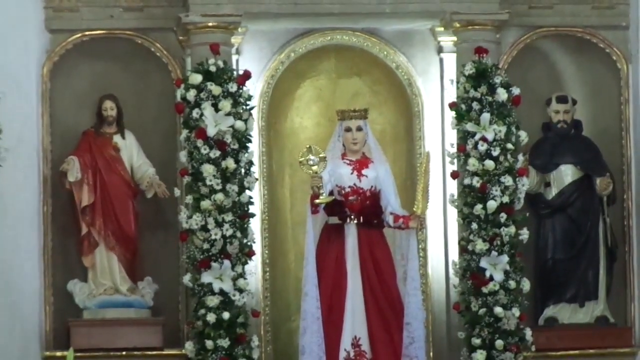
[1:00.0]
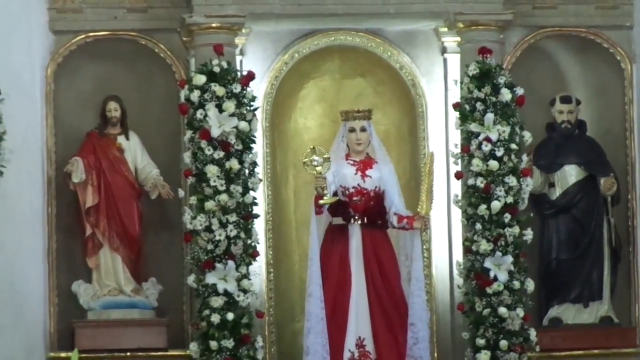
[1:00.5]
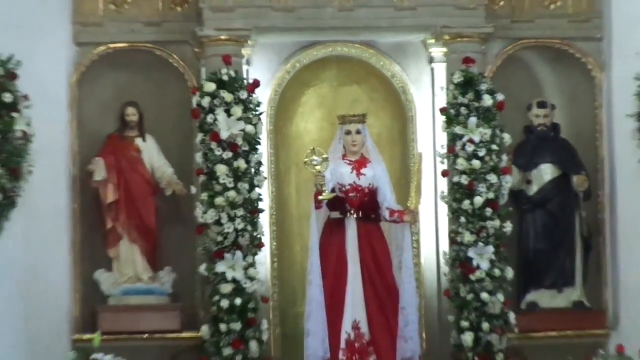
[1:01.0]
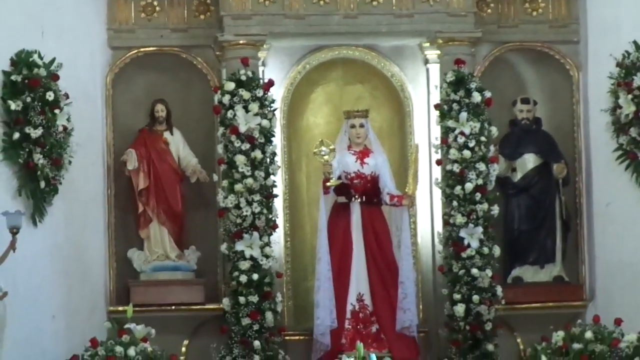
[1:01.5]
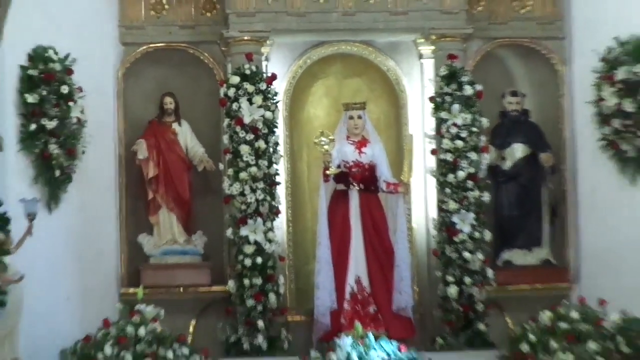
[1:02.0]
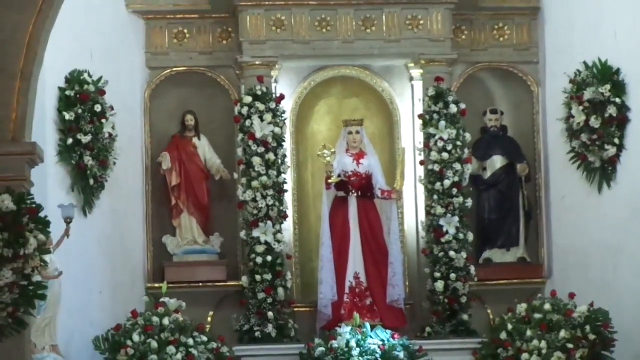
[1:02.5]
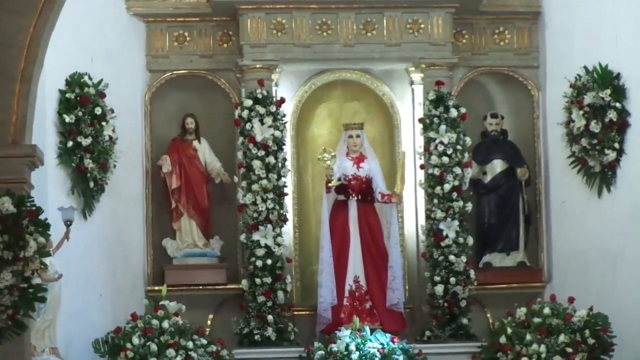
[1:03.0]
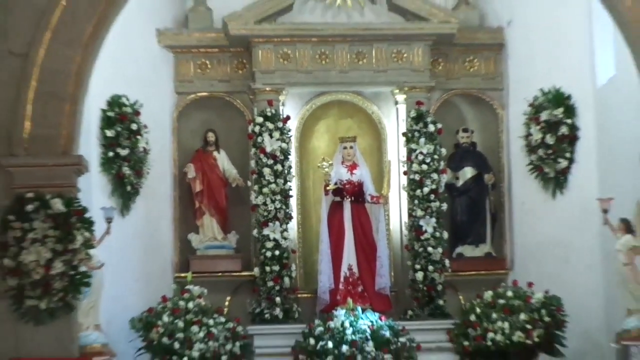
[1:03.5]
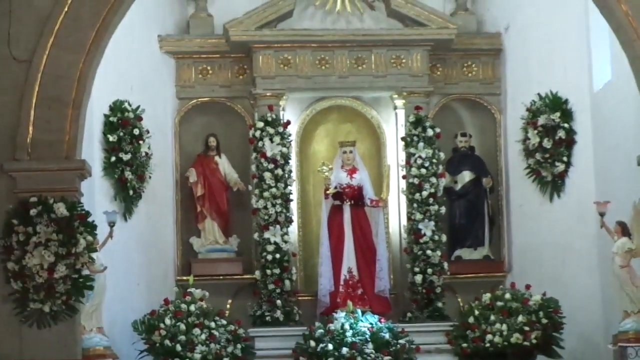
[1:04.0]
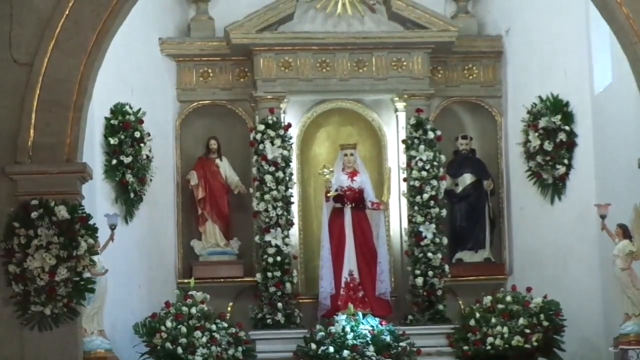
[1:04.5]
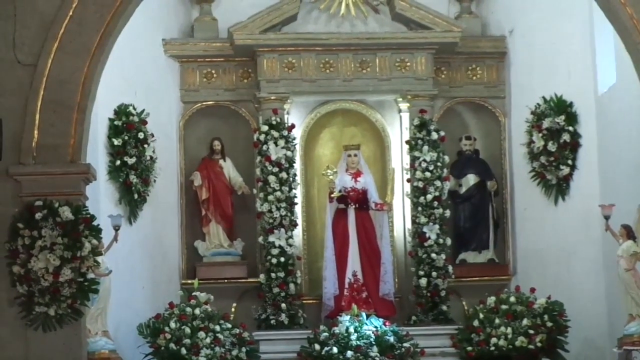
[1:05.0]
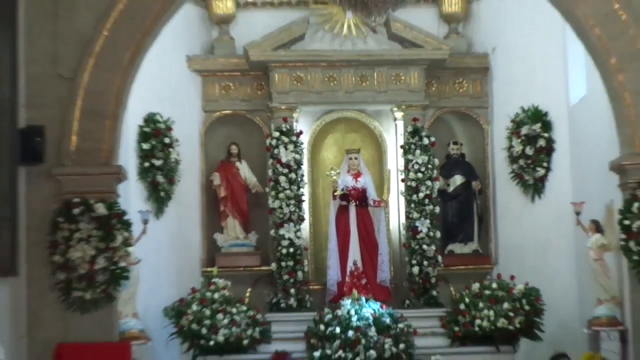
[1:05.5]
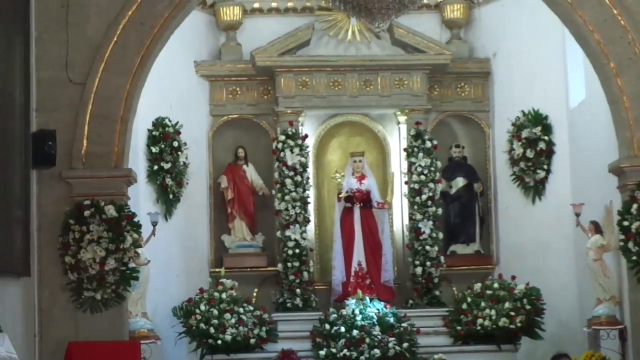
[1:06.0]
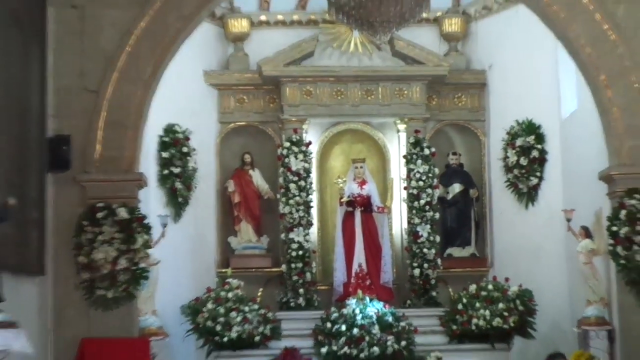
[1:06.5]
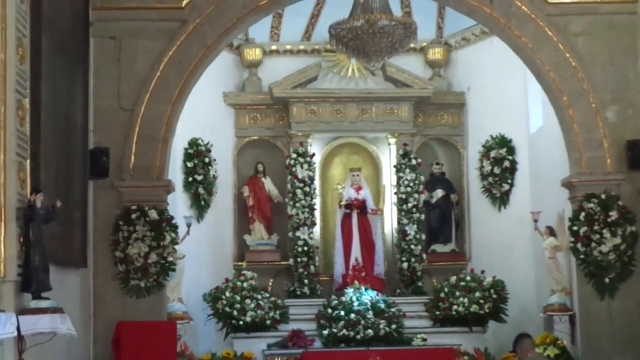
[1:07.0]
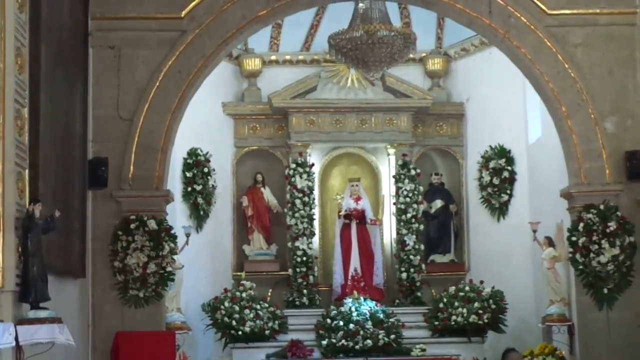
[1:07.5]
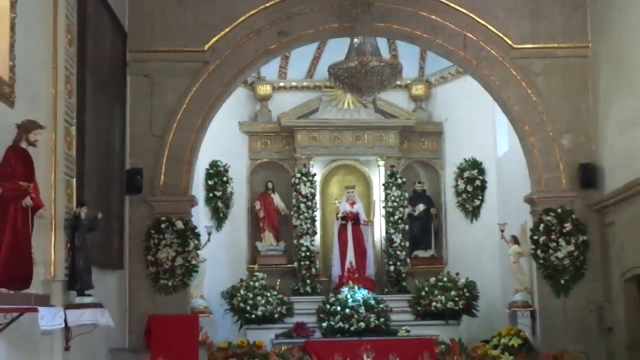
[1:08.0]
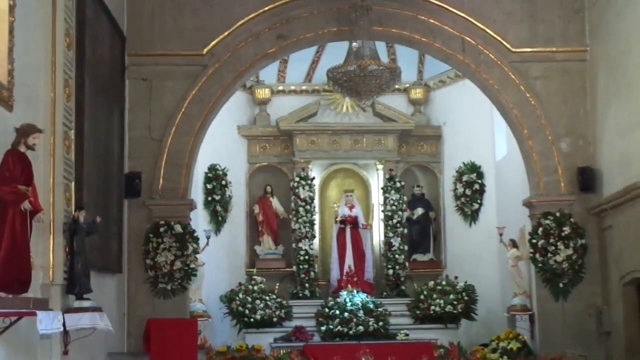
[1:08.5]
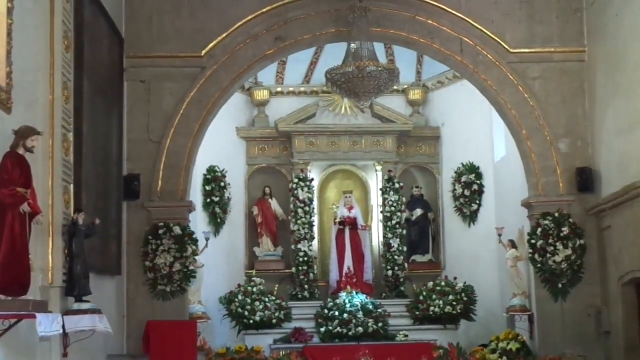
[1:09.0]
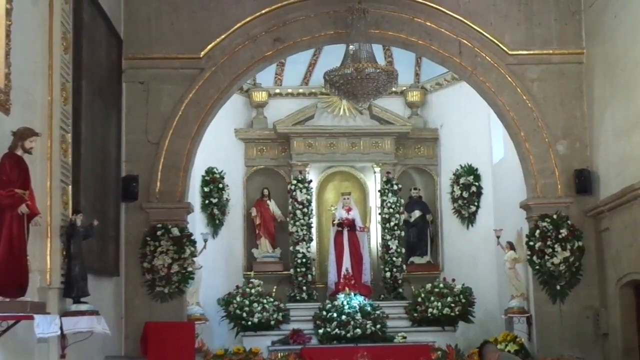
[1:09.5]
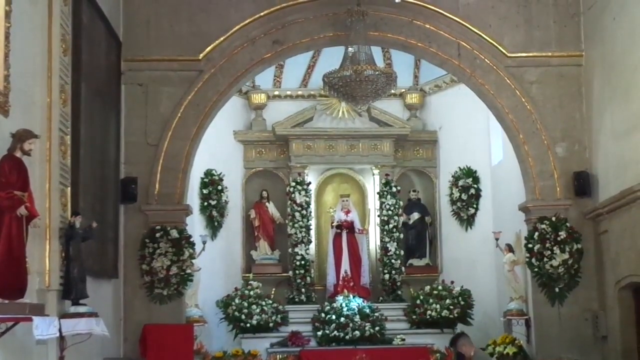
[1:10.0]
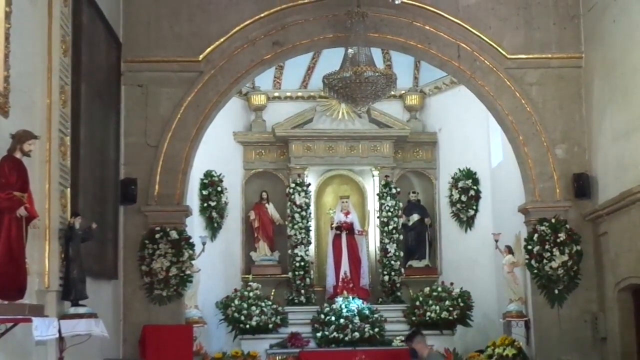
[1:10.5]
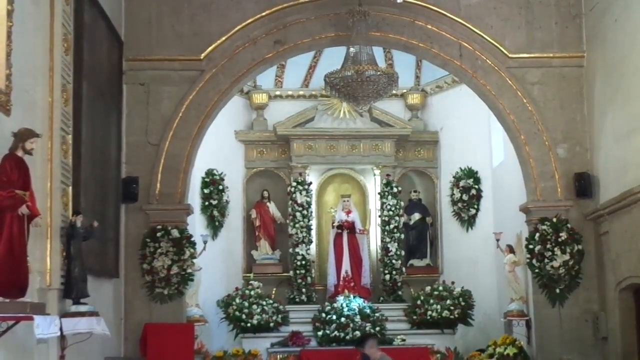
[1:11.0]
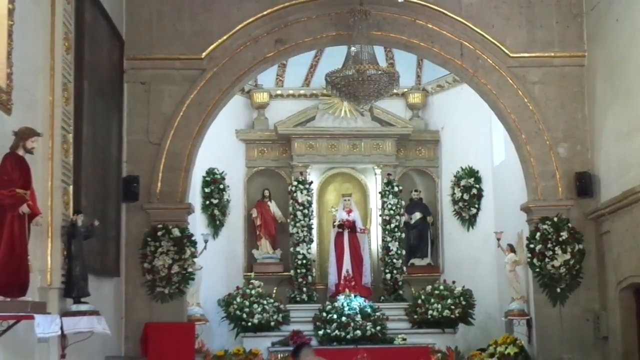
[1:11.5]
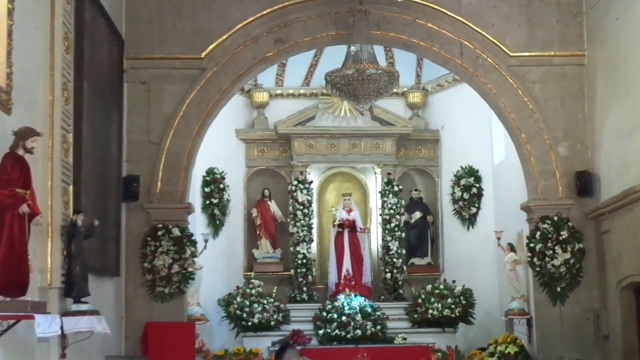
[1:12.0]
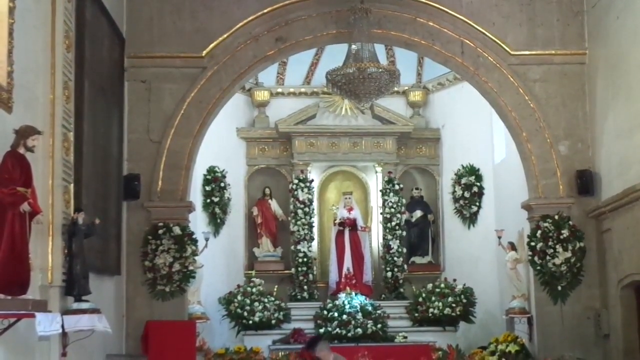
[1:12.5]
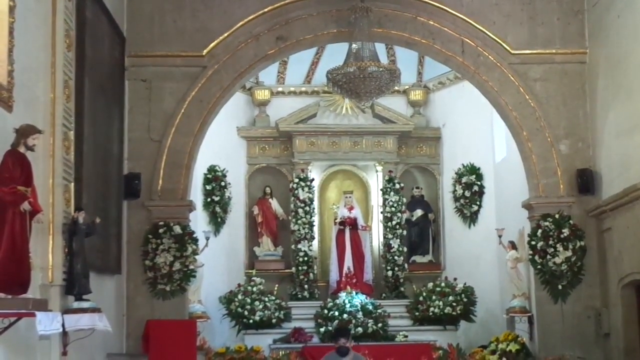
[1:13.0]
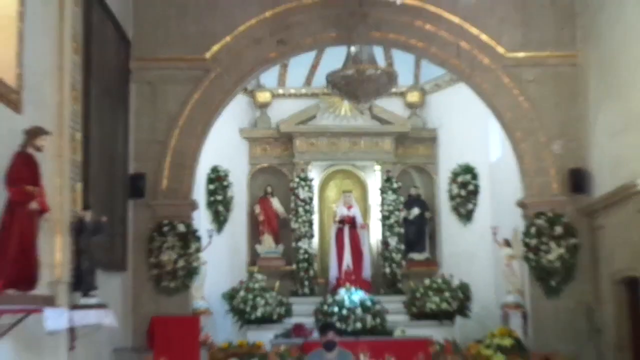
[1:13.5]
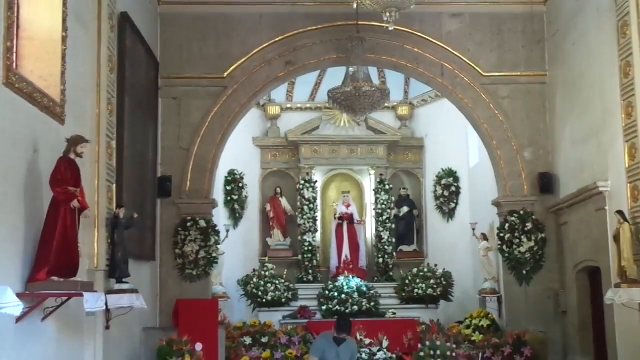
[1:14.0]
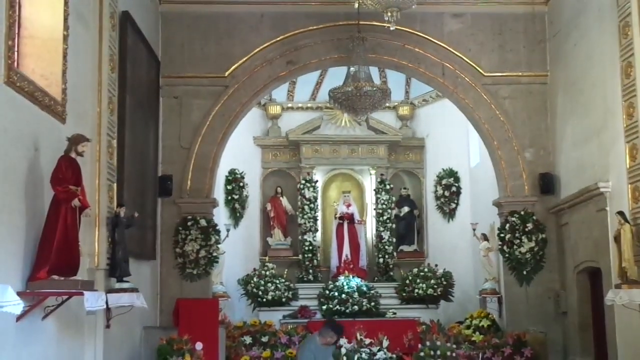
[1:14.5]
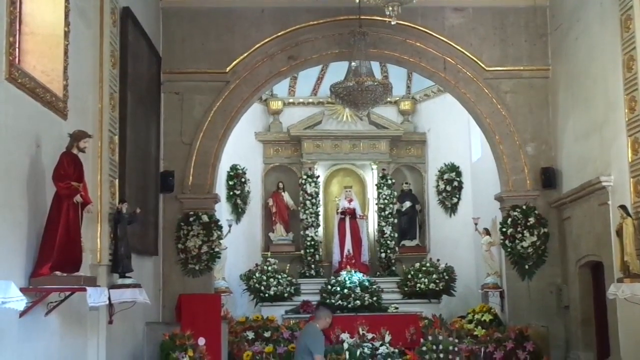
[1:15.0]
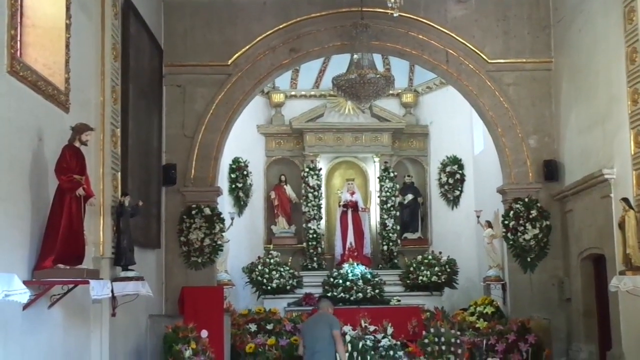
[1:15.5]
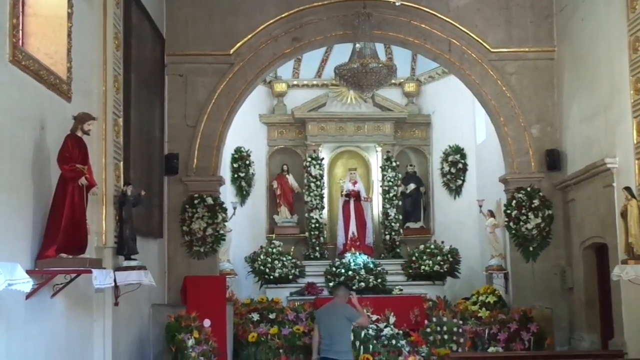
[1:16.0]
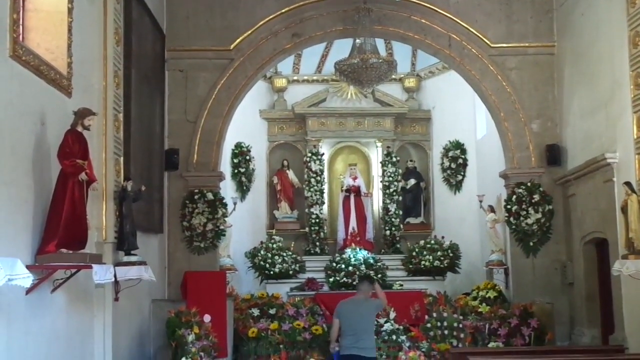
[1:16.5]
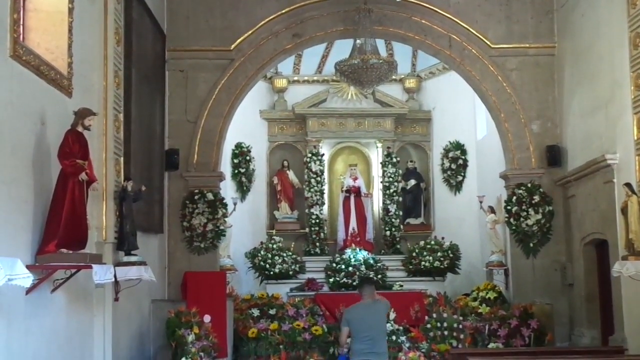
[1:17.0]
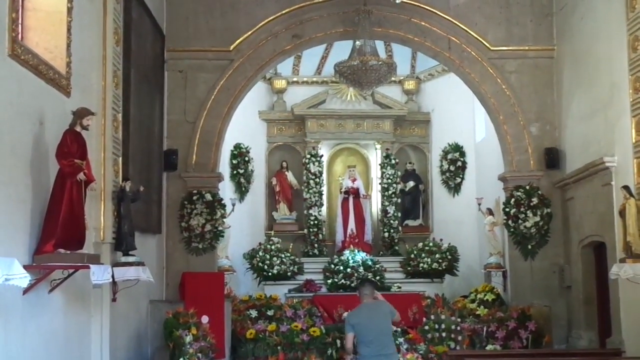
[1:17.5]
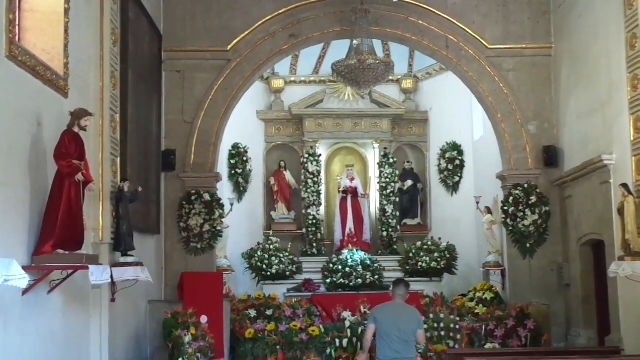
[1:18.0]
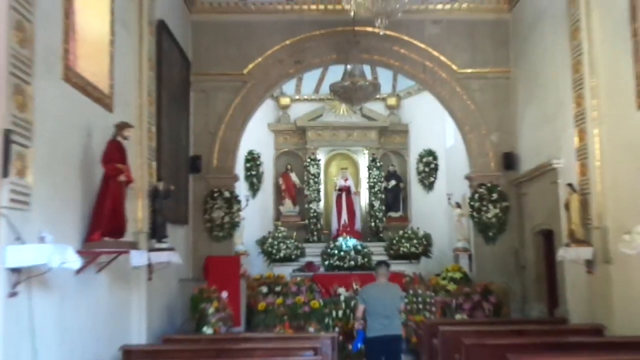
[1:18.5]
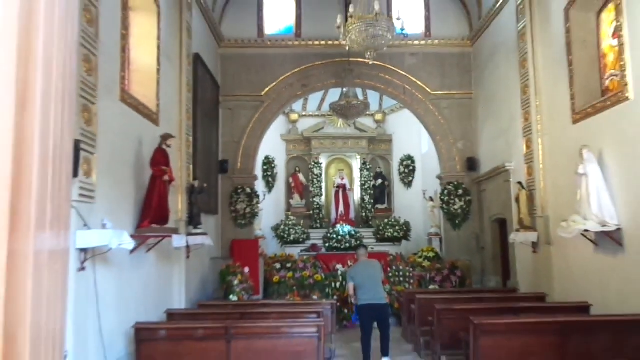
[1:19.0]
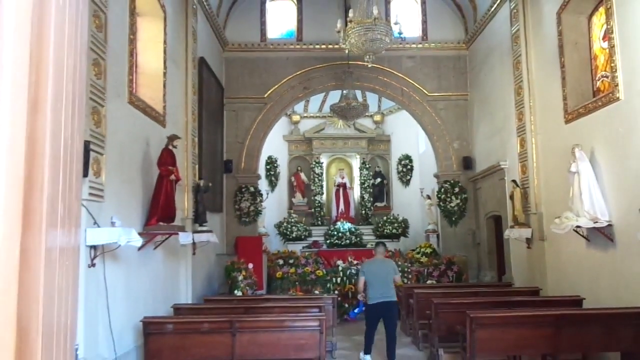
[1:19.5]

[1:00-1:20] Three statues on the back wall of a church span the entire width of the wall; the church is not big. Behind them are kind of golden recesses in arch shapes. On the left is Jesus in a white and red tunic, in the middle is a woman in a white and red long flowing dress with a crown and a long white veil, and on the far right is a man in a black long tunic. Between Jesus and the woman is a pillar adorned with a kind of vertical display of flowers, little daisies, lilies and carnations, and there is another one between the woman and the man in the black tunic. The camera pans back a bit to show the white side walls of the altar area.